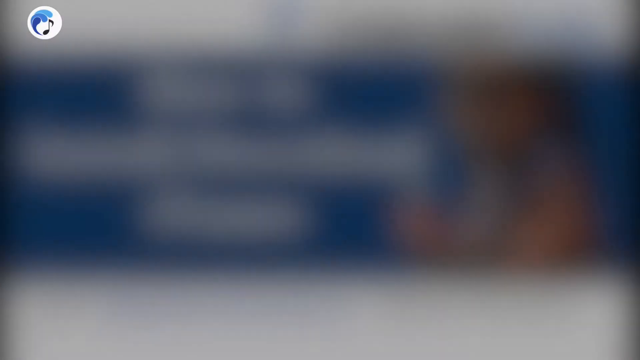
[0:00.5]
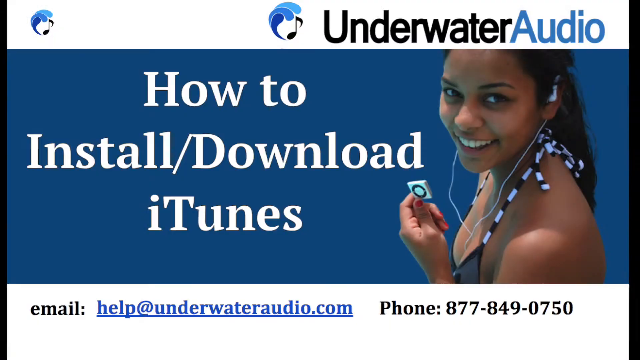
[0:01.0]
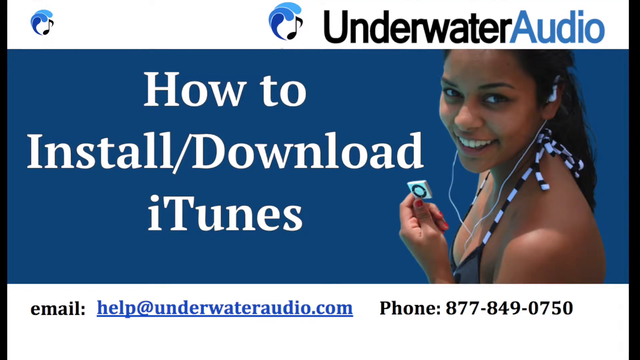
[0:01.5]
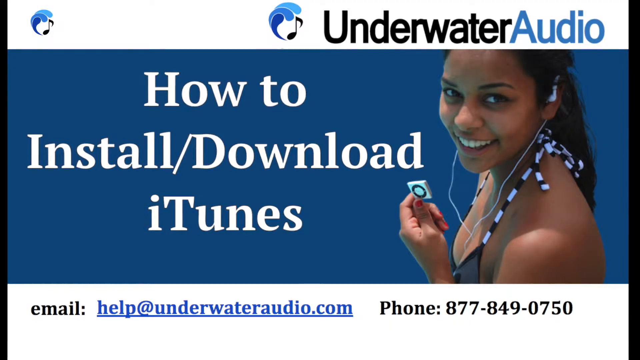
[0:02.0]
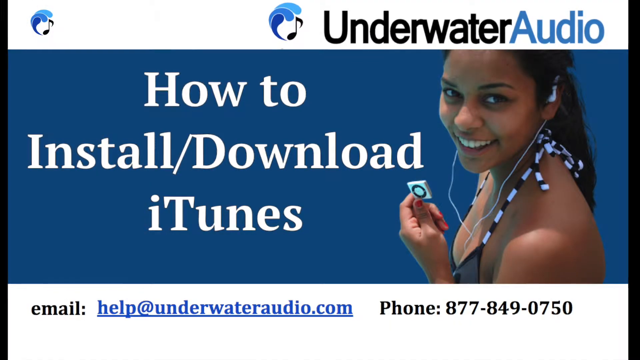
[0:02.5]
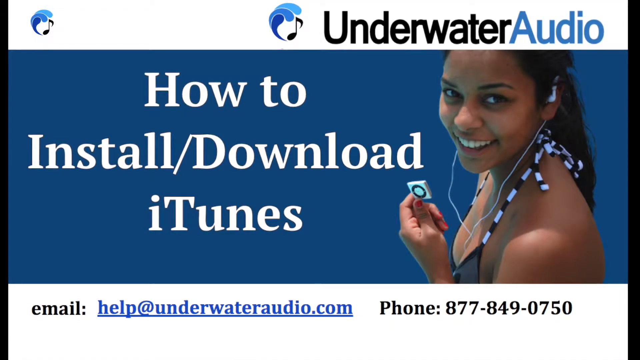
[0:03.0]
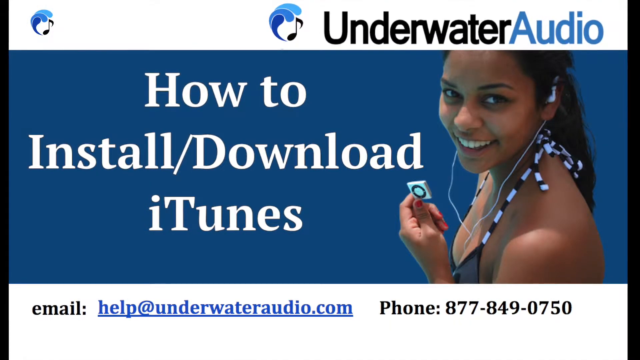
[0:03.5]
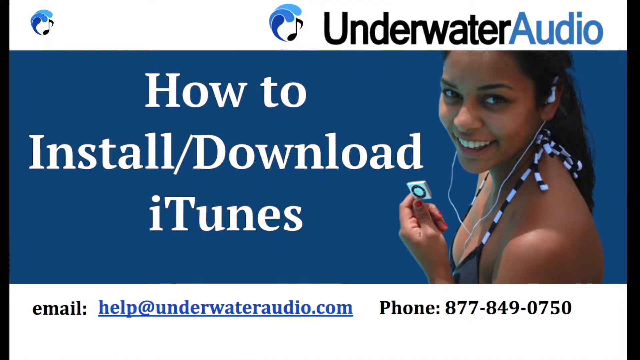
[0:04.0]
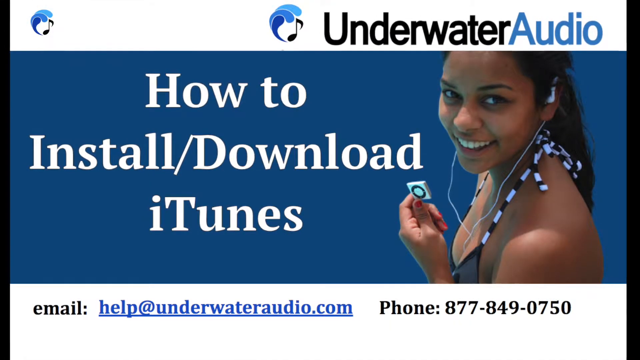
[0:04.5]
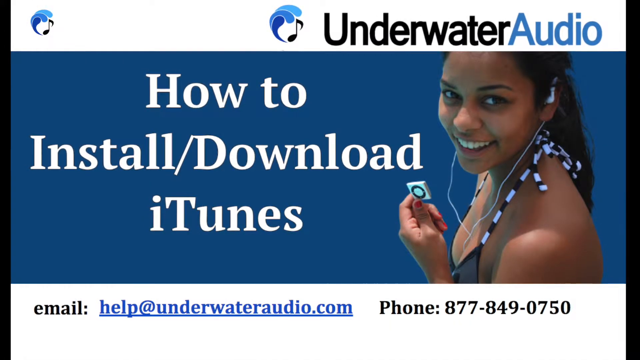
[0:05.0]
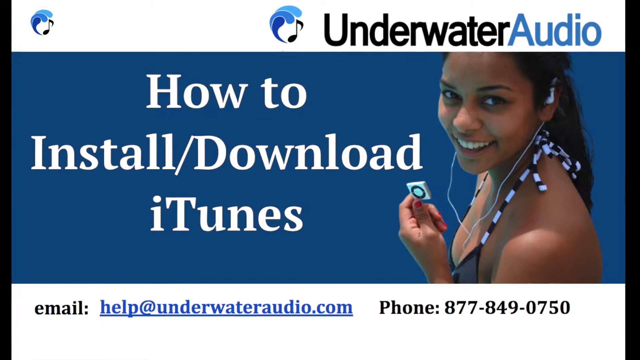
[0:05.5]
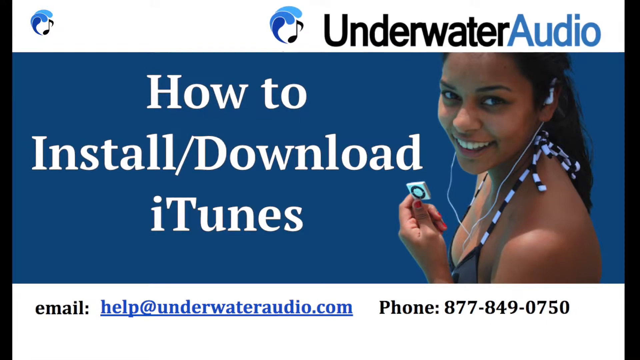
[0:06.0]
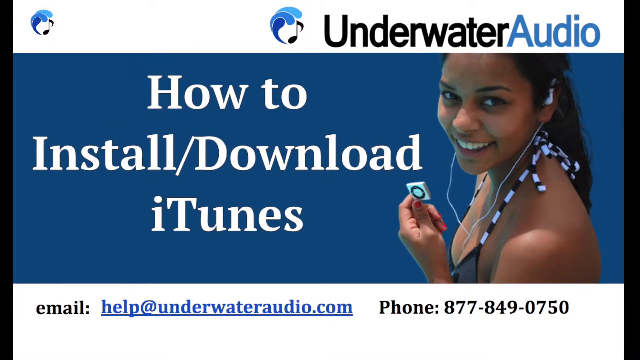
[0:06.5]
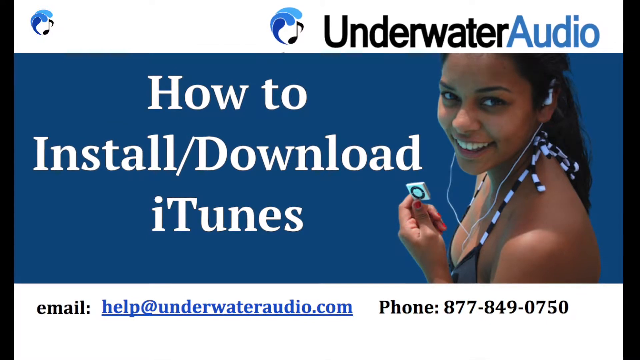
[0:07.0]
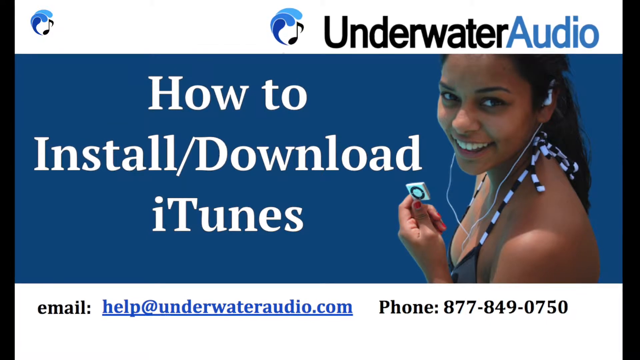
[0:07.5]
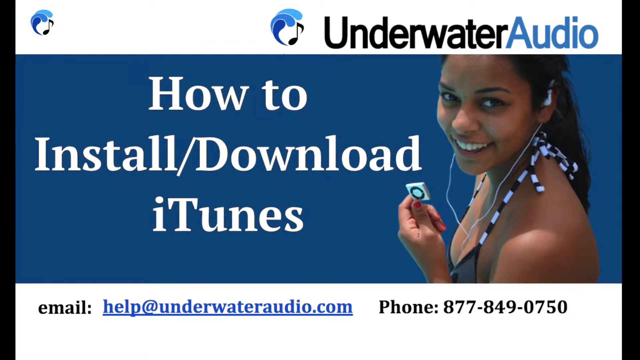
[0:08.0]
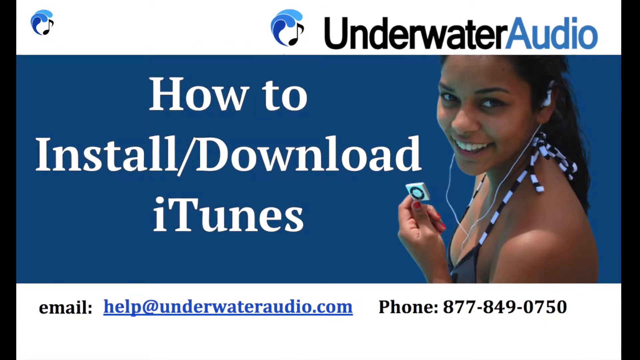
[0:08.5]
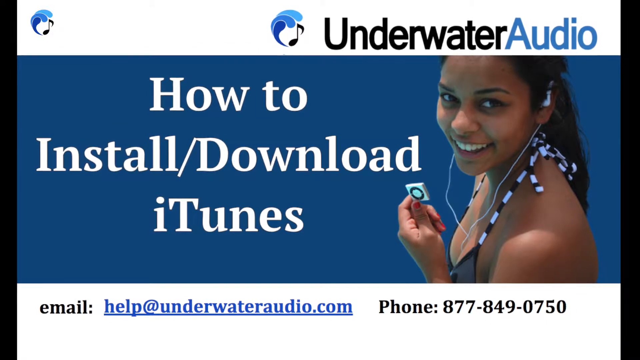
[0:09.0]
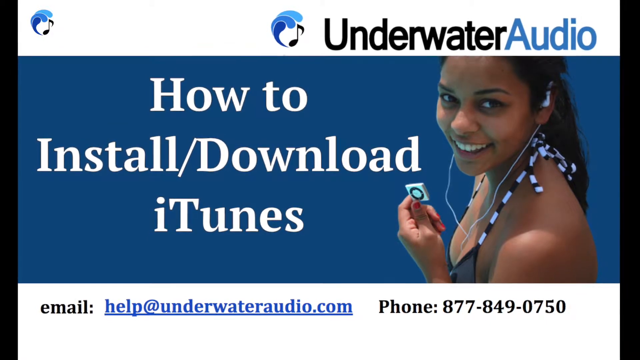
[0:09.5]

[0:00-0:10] A screen shows a smiling woman wearing wired headphones and apparently holding an iPod shuffle; the image looks a bit outdated. It appears to be a still photo, possibly on a website as some sort of ad. There is a lot of text: "underwater audio," which looks like the name of the company, and then "how to install / download iTunes." An icon shows three blue droplet-like shapes resembling water and a little musical note. It looks like the video is going to teach how to download iTunes.